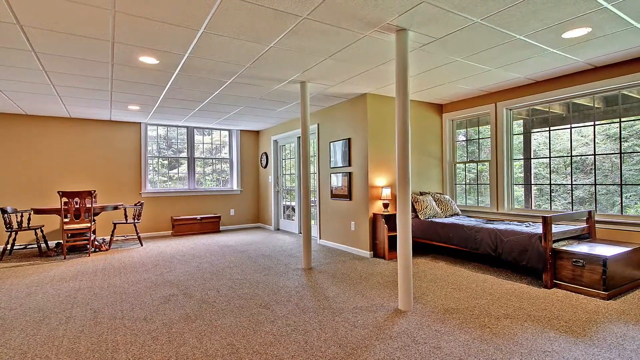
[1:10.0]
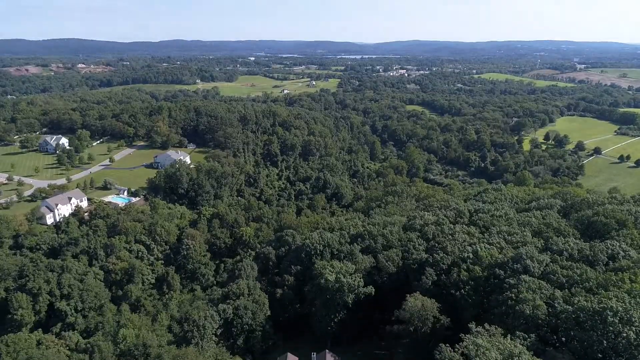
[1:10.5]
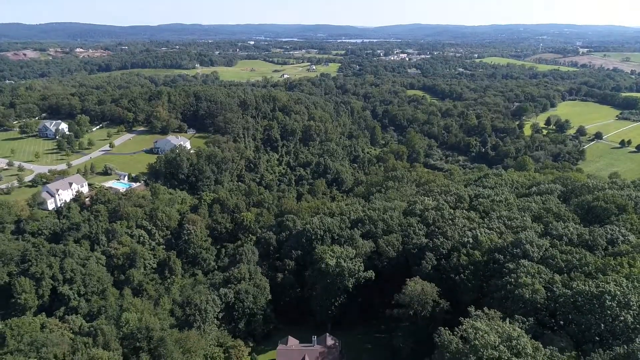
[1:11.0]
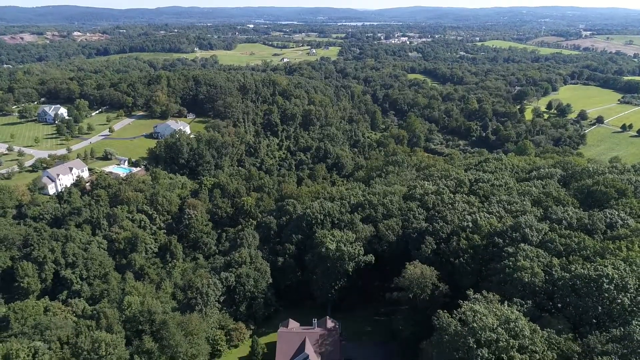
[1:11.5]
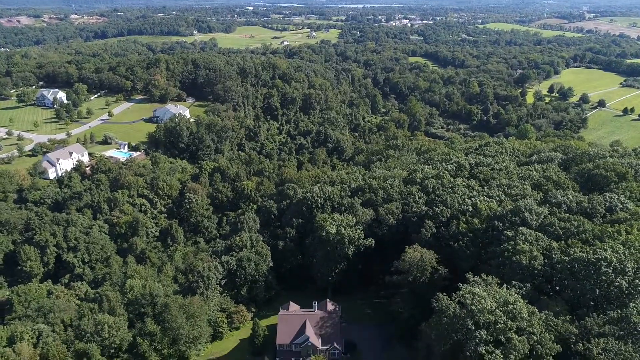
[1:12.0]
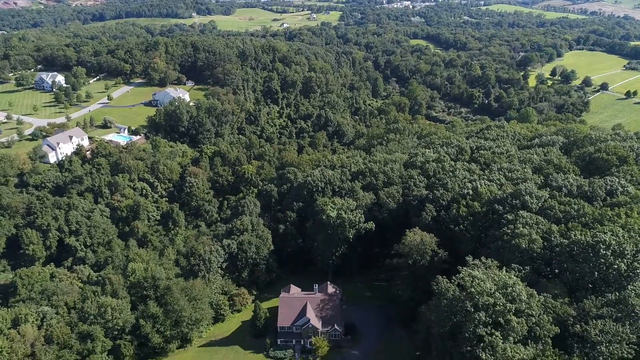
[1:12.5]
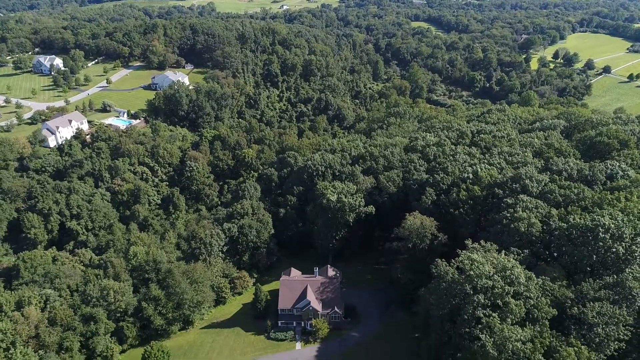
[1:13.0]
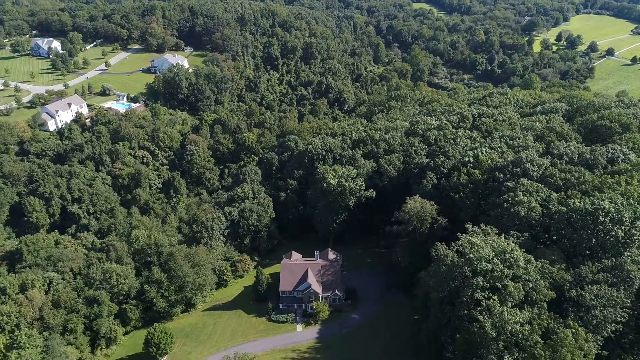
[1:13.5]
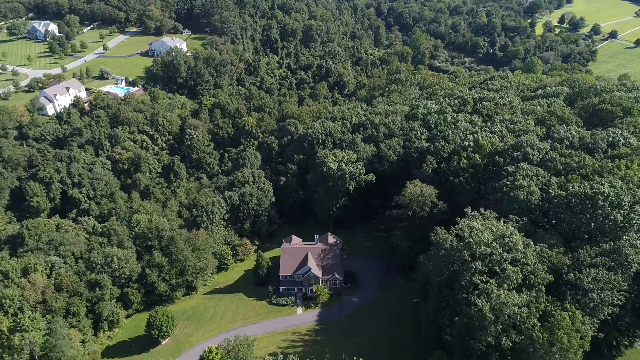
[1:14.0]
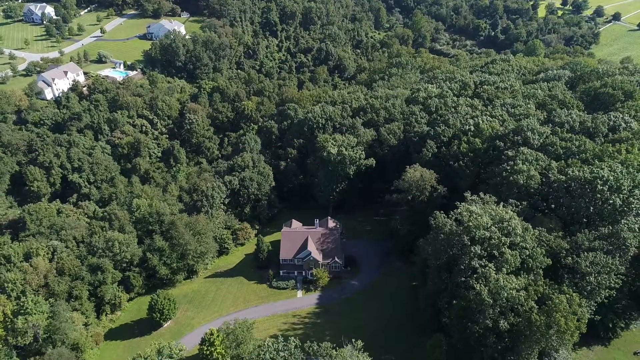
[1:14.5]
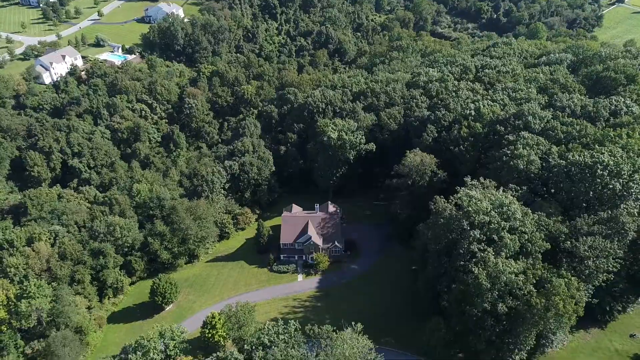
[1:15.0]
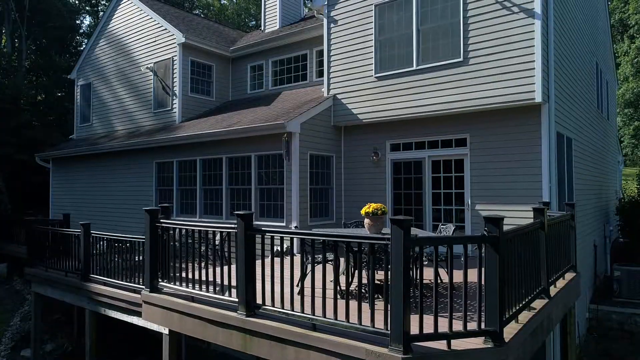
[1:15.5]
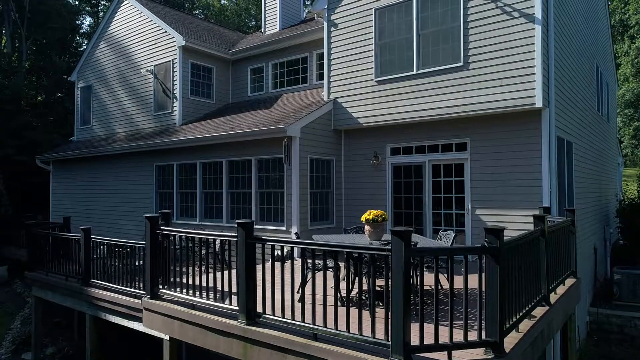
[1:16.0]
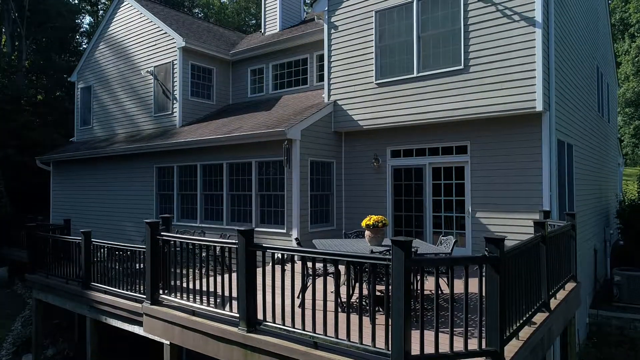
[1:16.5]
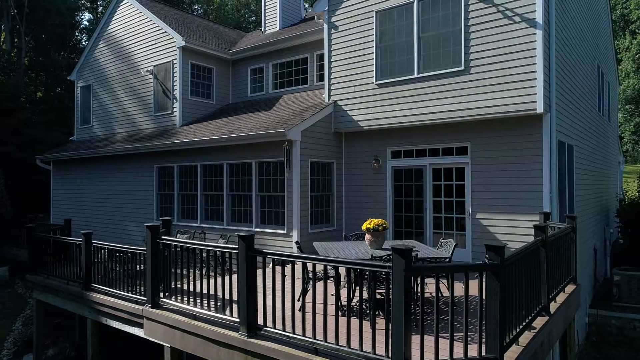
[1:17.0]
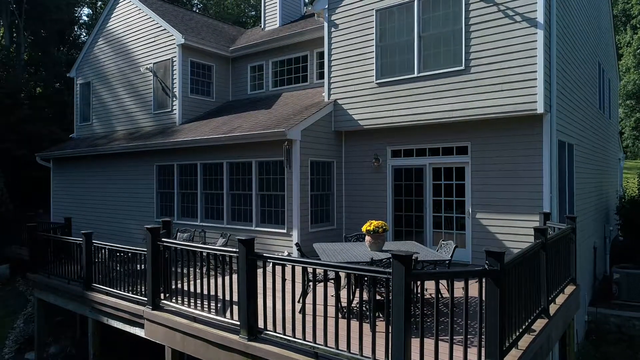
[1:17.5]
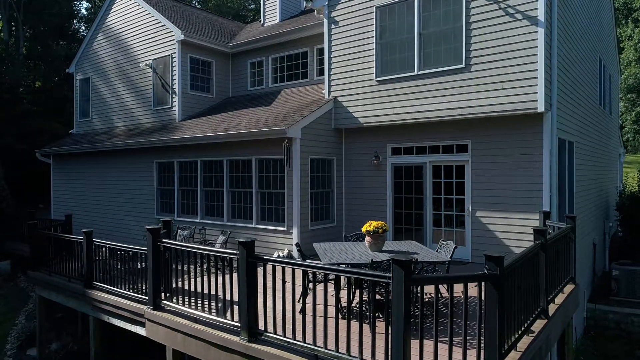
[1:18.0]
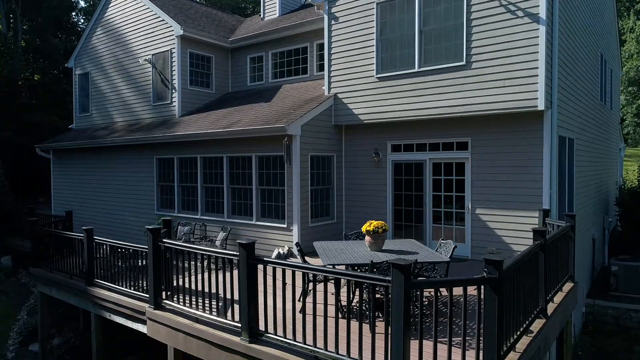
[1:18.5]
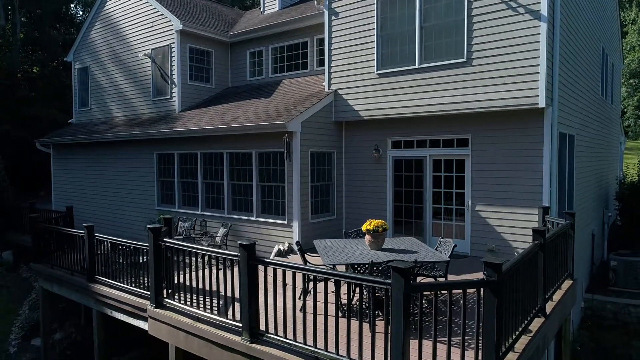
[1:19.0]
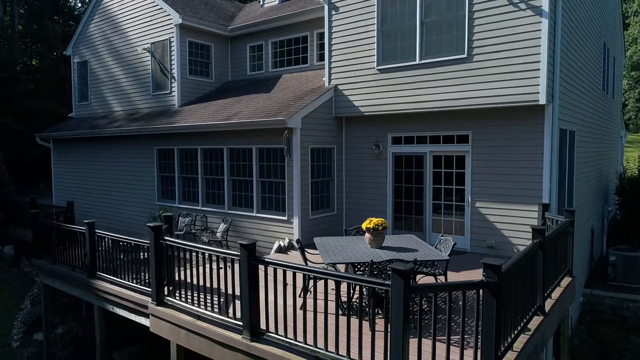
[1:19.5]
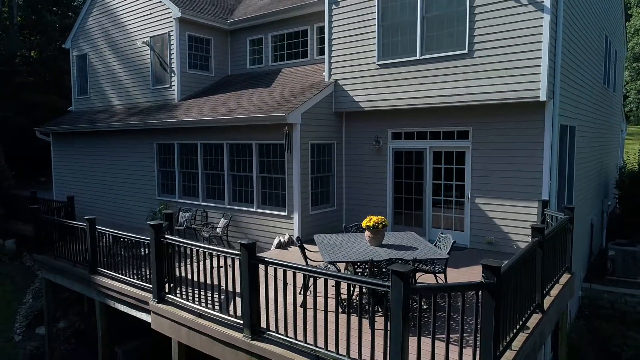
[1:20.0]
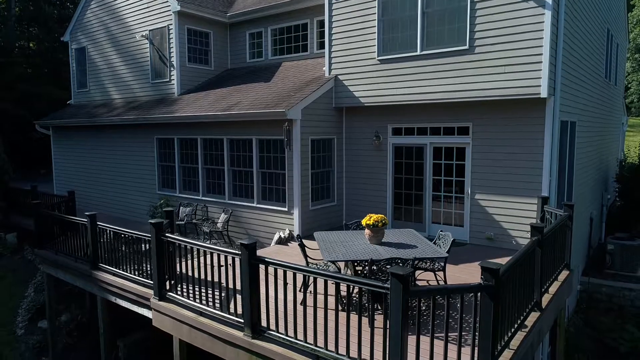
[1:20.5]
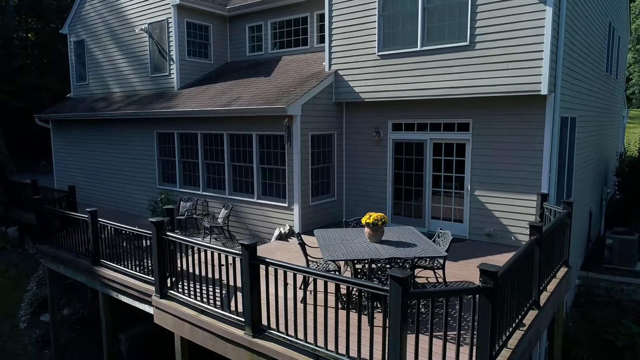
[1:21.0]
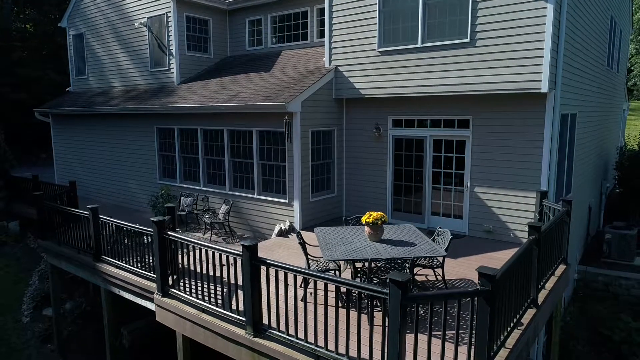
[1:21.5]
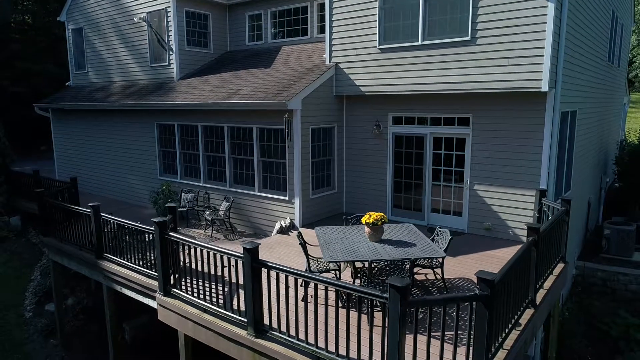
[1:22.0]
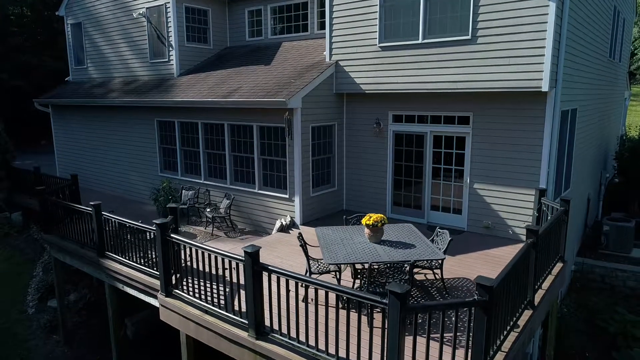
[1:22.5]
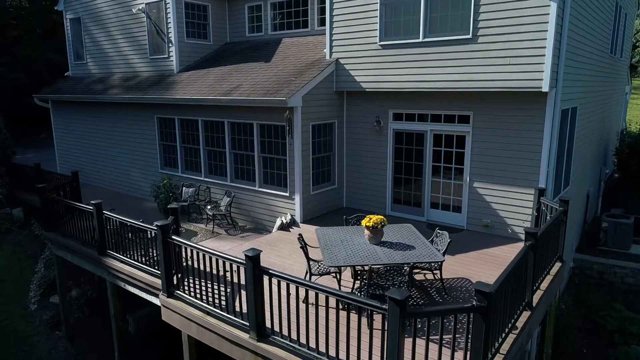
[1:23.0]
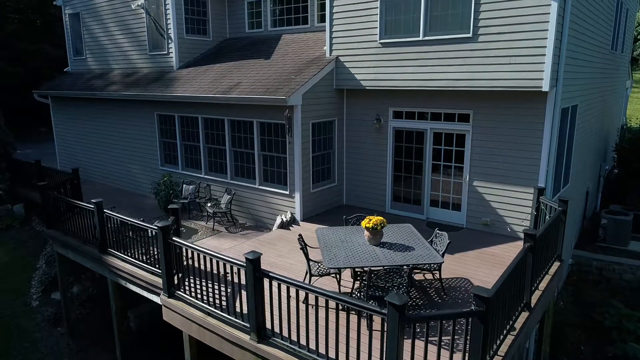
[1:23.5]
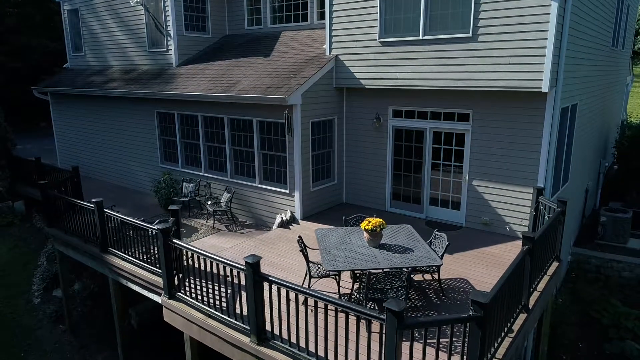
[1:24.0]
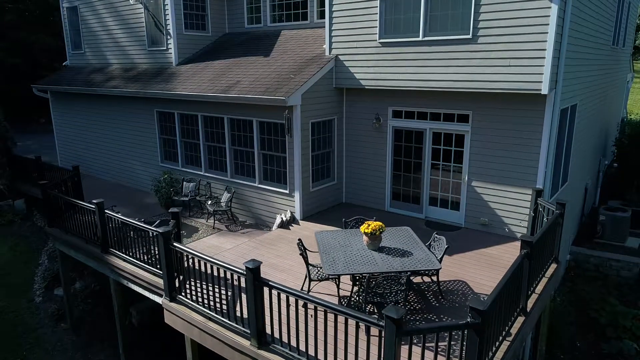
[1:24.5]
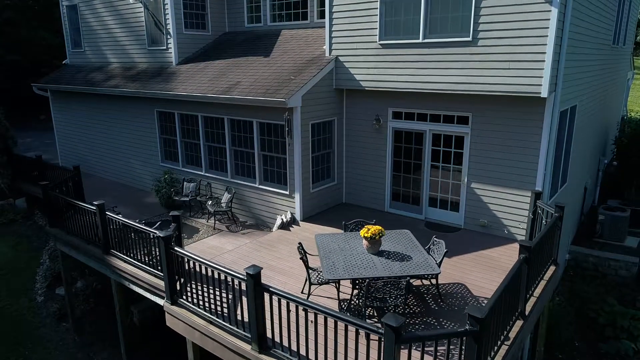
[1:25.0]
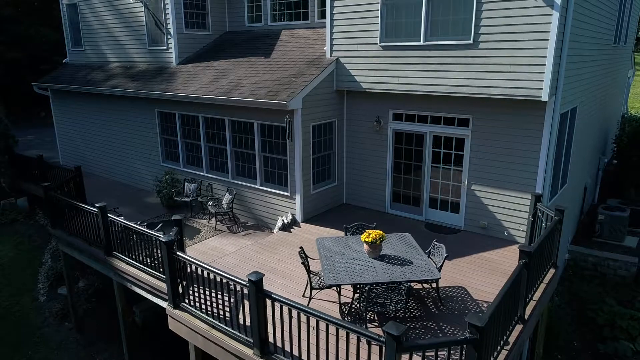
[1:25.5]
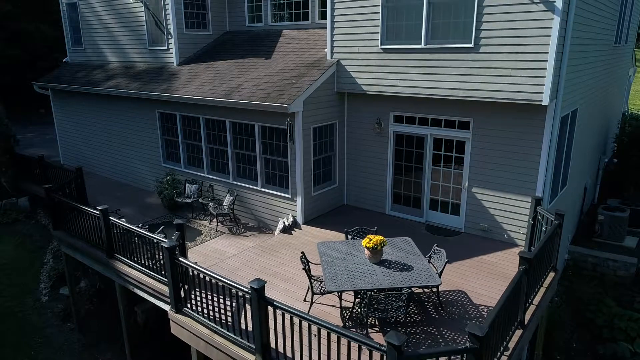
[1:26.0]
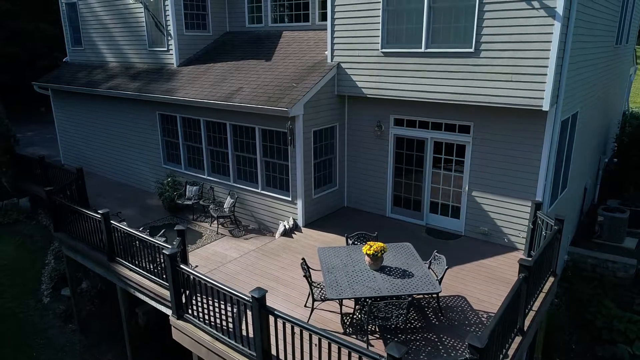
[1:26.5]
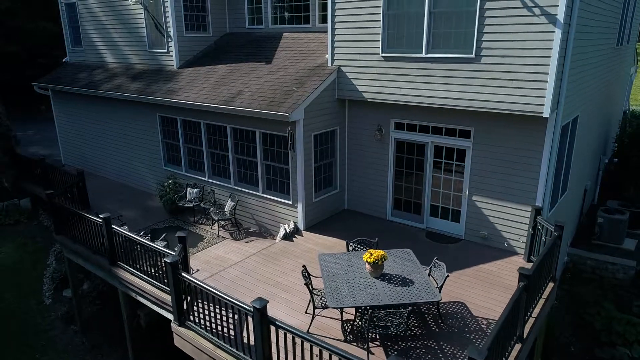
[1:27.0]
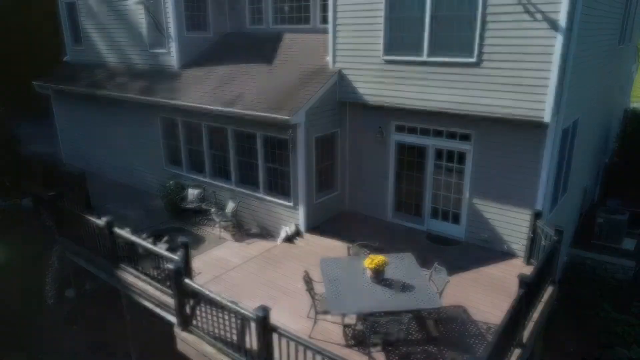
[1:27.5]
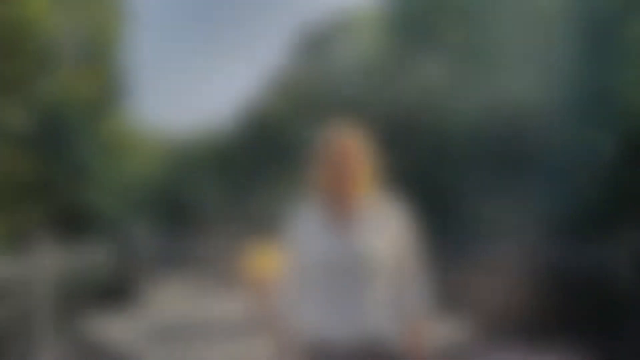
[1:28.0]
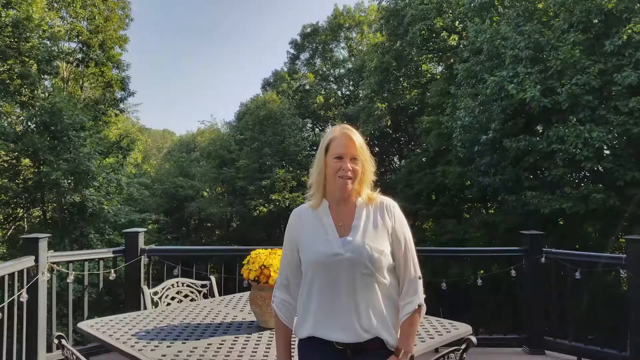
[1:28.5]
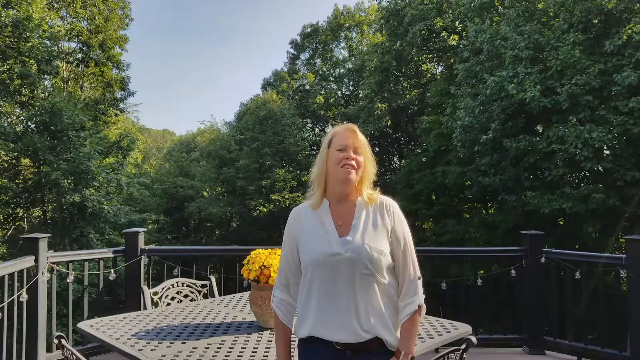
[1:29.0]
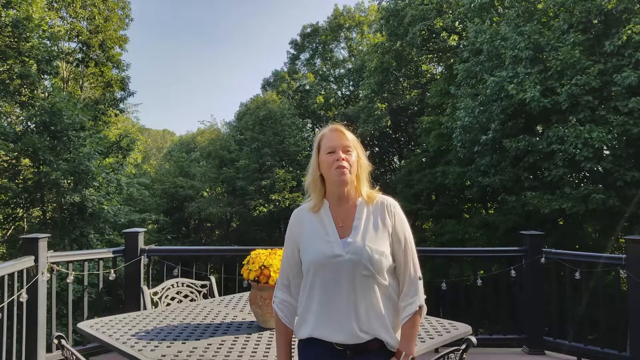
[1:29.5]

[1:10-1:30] A very big room upstairs could be a fun room or play room, but there is not much in it, just what looks like a couch or bed. There is a table to the left. The wall has kind of a brownish-orange texture, and the ceilings almost look like the ceilings in a store. There are two pillars, recessed lights and grayish carpeting, and two French doors go to the outside, possibly to a patio on top. A drone view from outside then shows a few buildings to the left, a lot of trees, and a far-off horizon with a grayish haze. To the right is green that almost looks like a golf course. The house looks small in front of all the trees. Another view, apparently the back of the house, shows a patio with a table holding a flower pot with flowers. A fence border around the house is kind of a brown, black and gray colour.